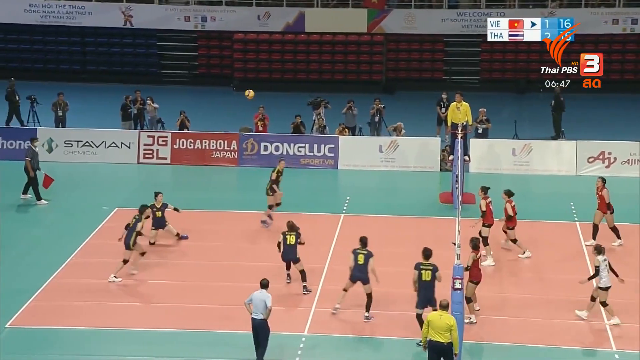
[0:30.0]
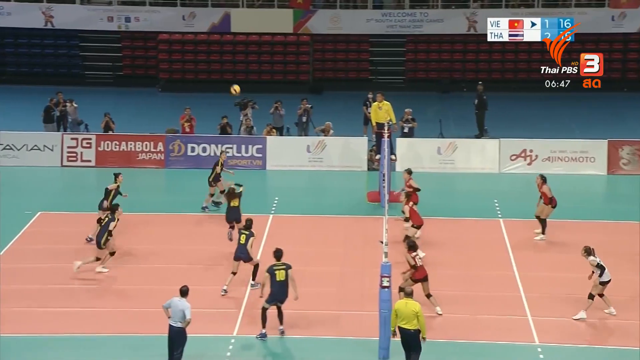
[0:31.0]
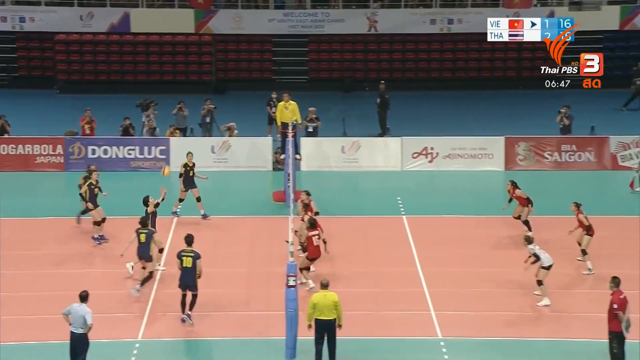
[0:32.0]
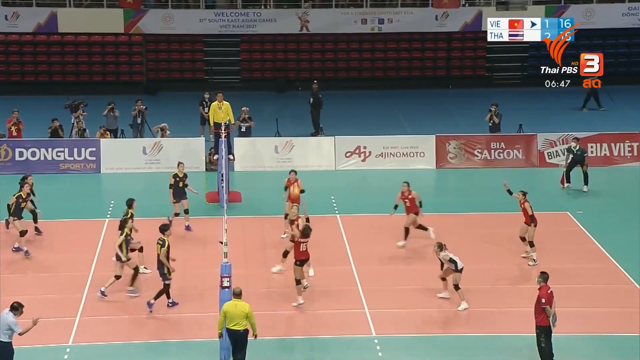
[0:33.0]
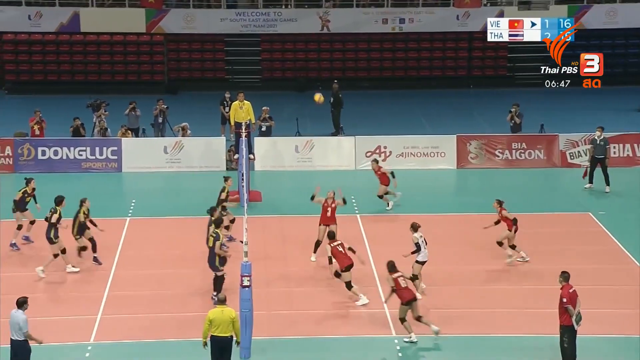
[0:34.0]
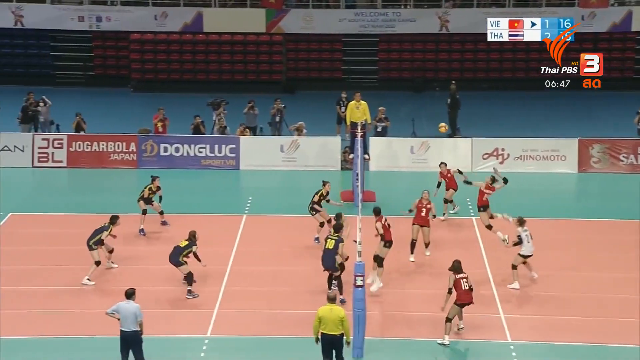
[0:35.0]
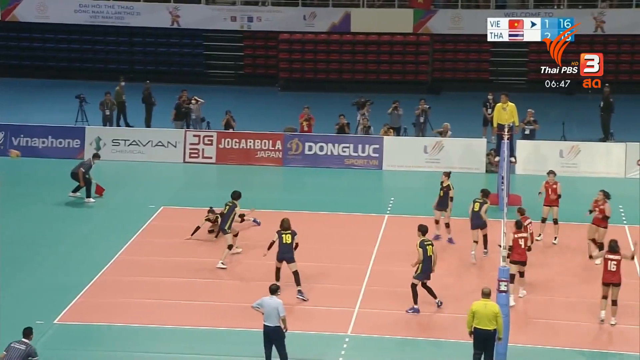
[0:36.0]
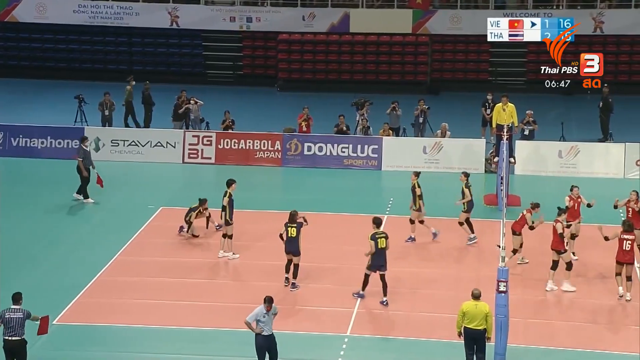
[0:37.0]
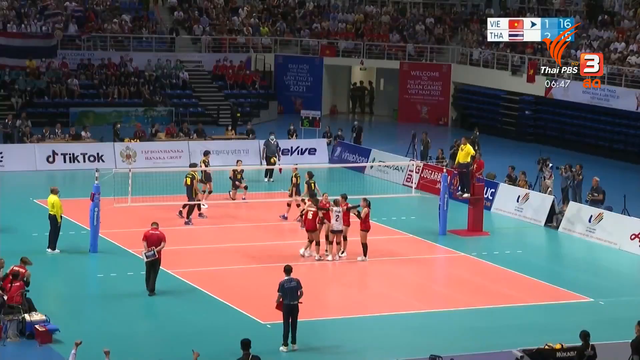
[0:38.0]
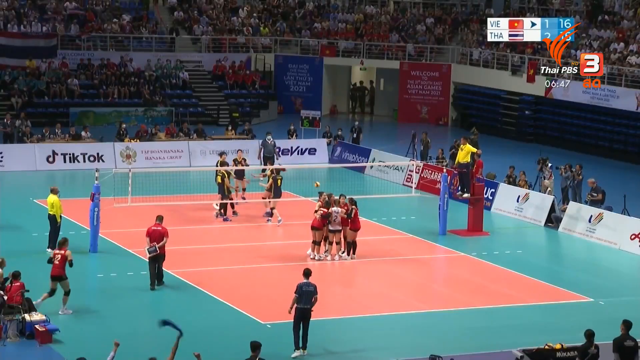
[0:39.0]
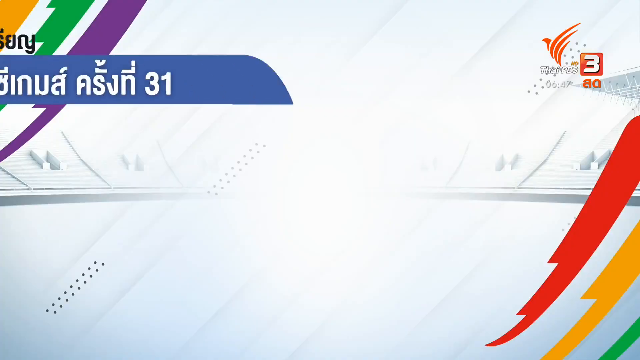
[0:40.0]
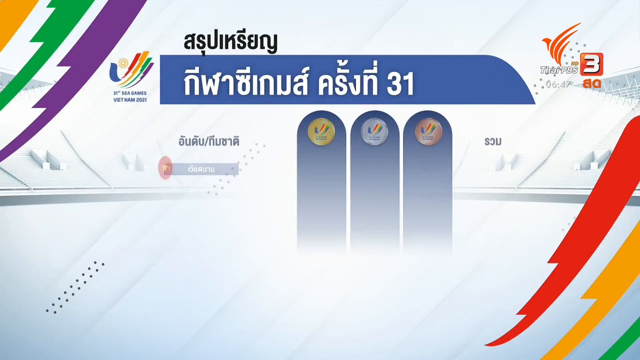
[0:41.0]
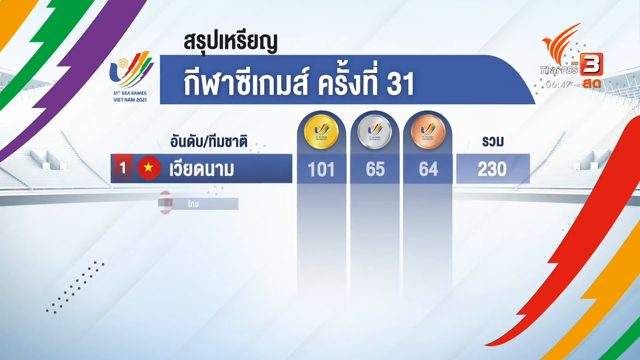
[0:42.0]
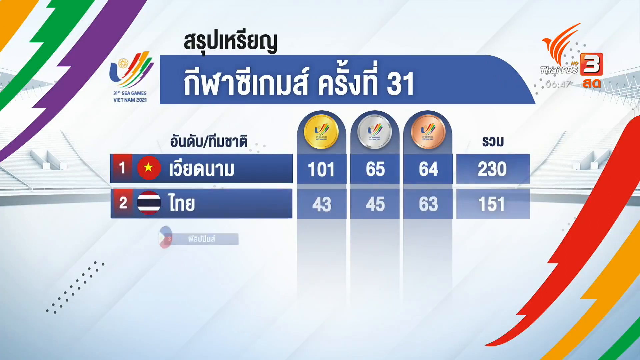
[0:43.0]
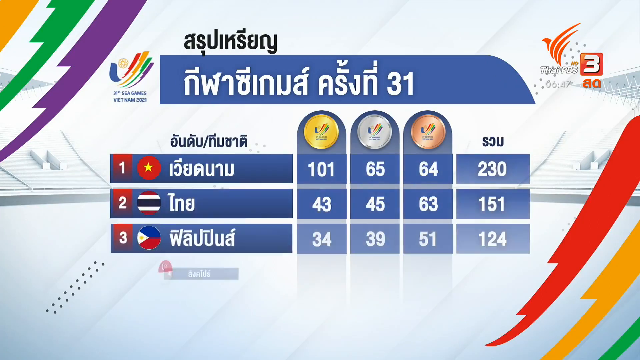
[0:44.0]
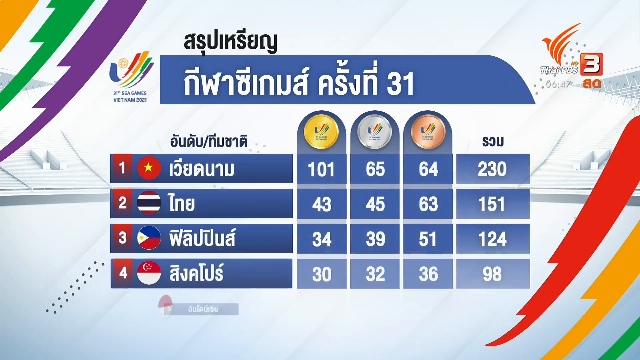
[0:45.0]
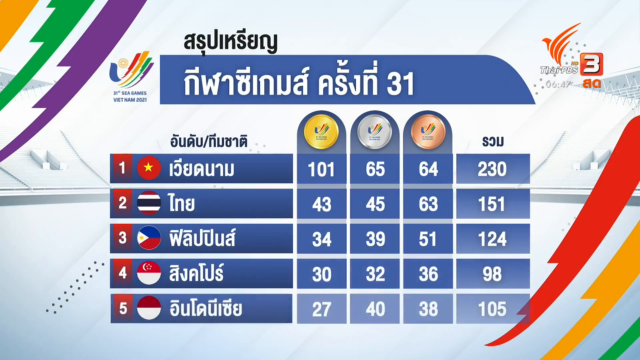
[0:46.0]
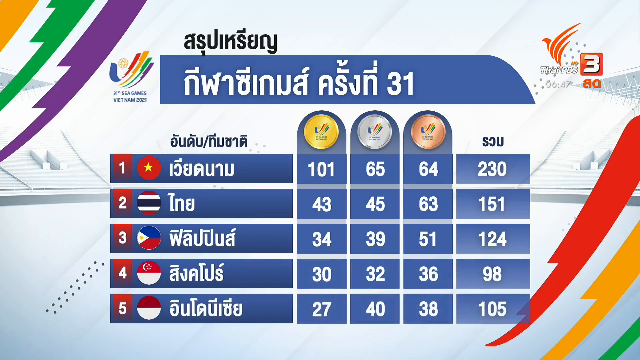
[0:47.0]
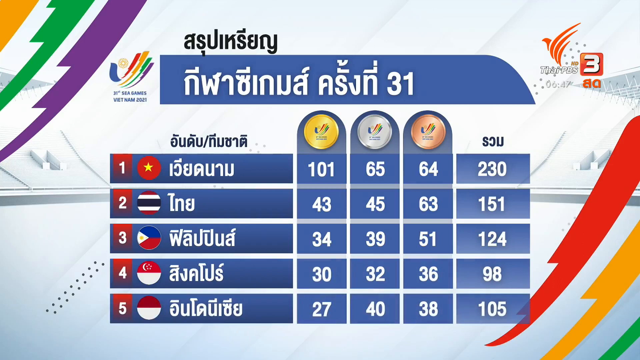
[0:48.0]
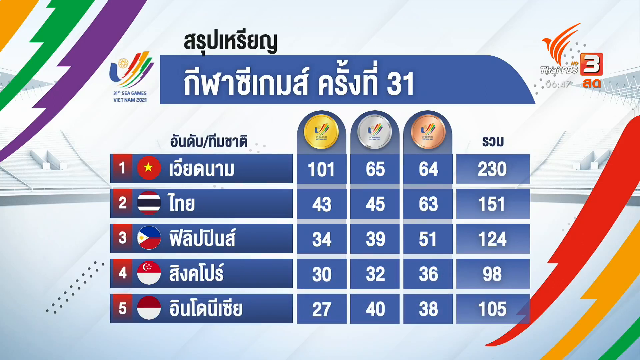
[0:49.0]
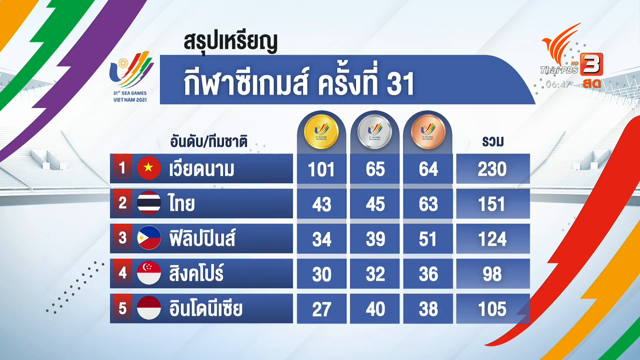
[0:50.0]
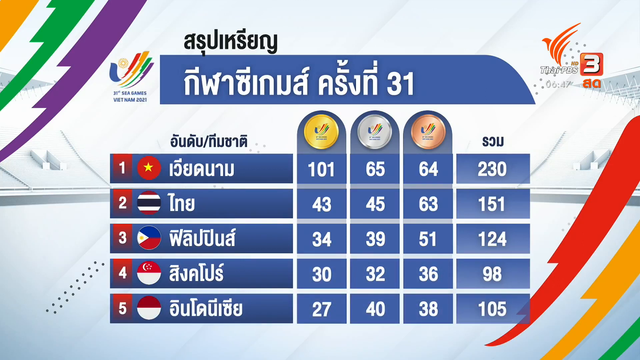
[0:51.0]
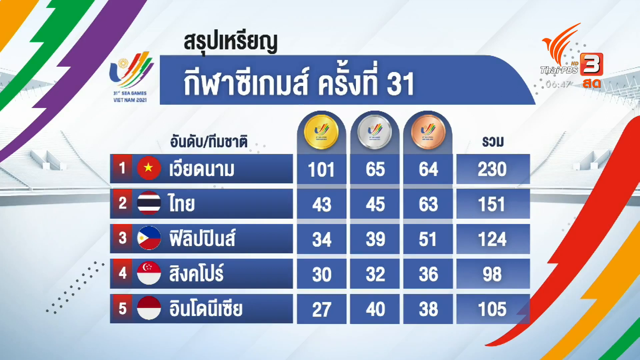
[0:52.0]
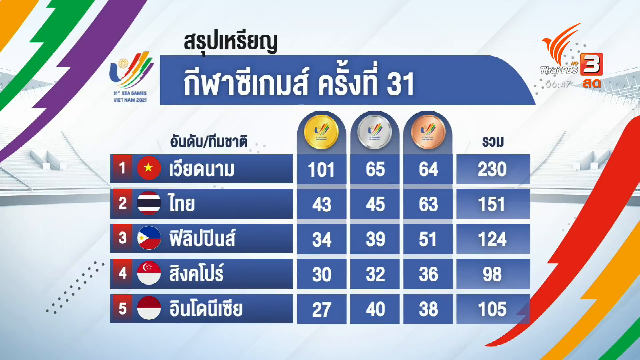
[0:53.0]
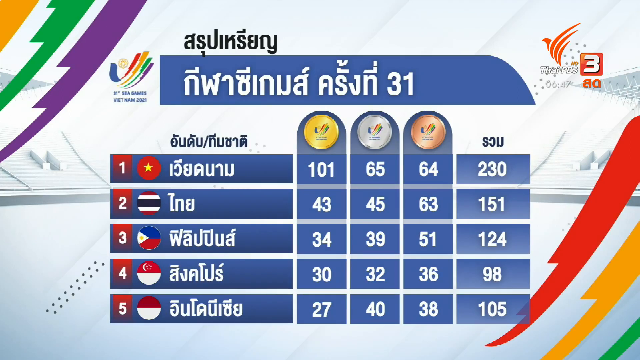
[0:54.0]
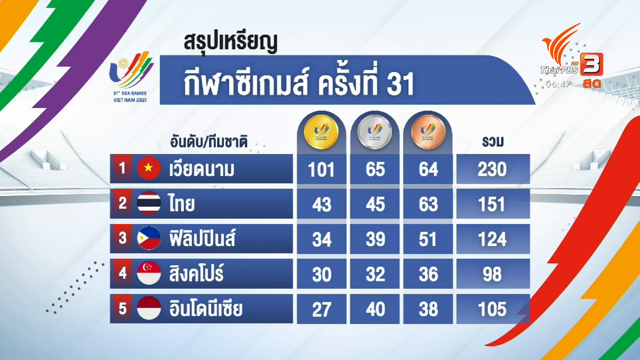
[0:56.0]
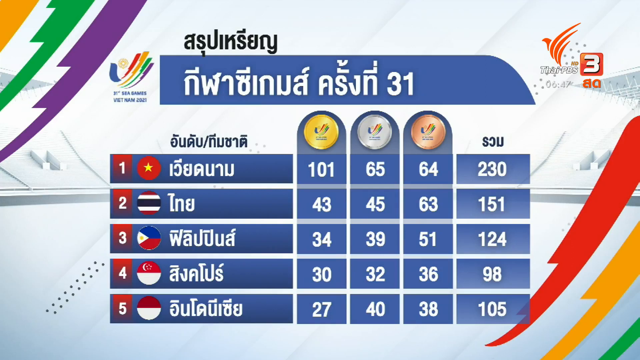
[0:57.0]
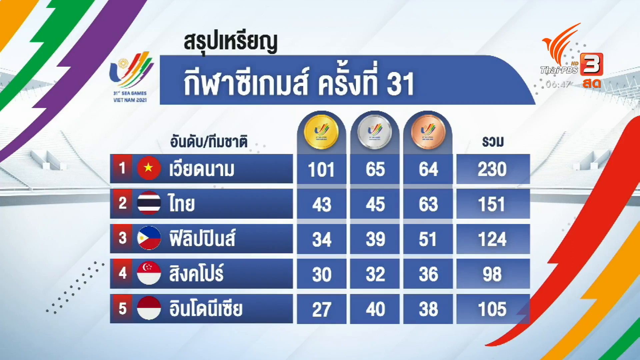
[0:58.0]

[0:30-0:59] The return gets over the net, and Thailand spikes it and wins the point. The players huddle up again, and the play is then shown from the opposite side angle. A graphic, apparently showing a medal count for the event, follows. The opposing team is apparently Vietnam, dressed in blue or green, while Thailand is in red. The medal count lists countries with flags; China, apparently marked by a red star, seems to be at the top with by far the most golds and the most medals. The score has changed dramatically from earlier, suggesting a jump in the content, so this is probably a highlight show with the opening, a couple of points, the results and the medal counts.